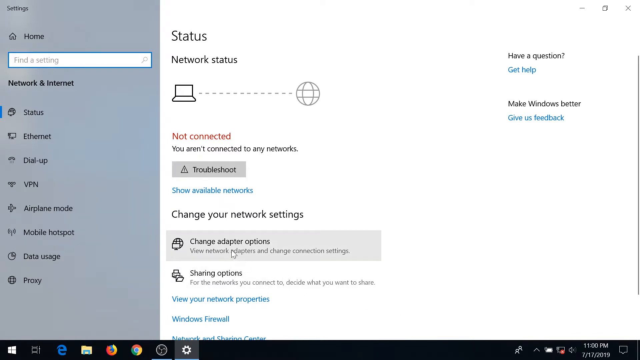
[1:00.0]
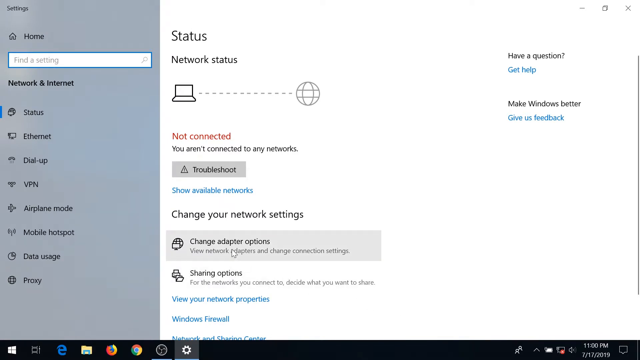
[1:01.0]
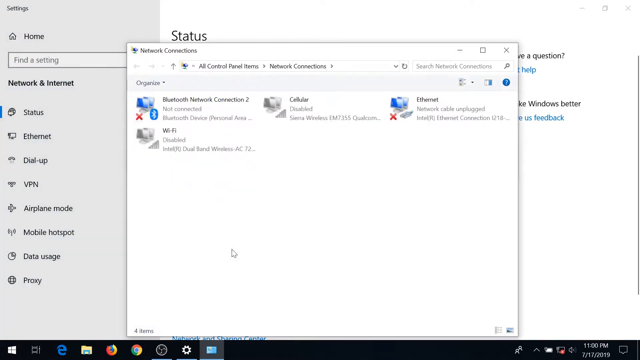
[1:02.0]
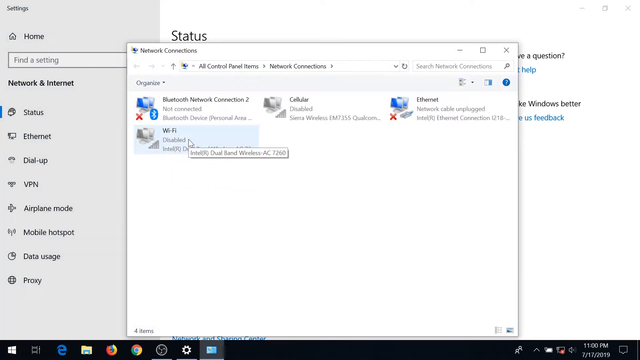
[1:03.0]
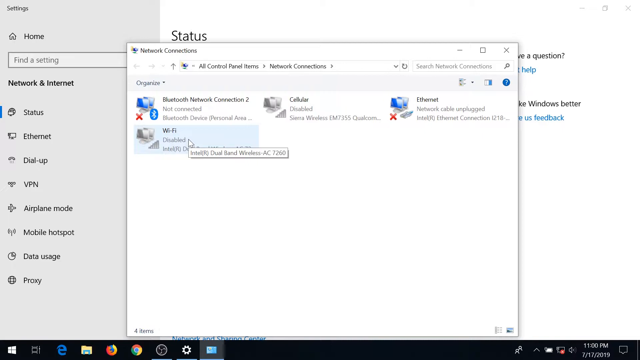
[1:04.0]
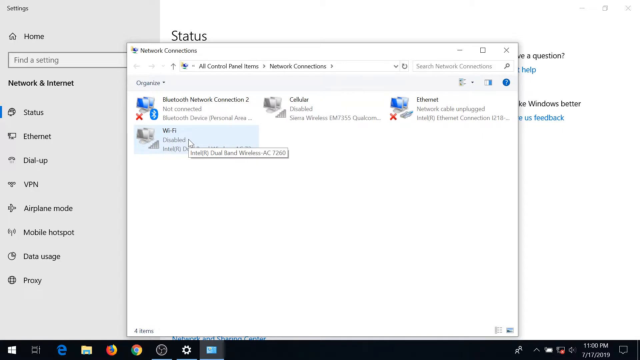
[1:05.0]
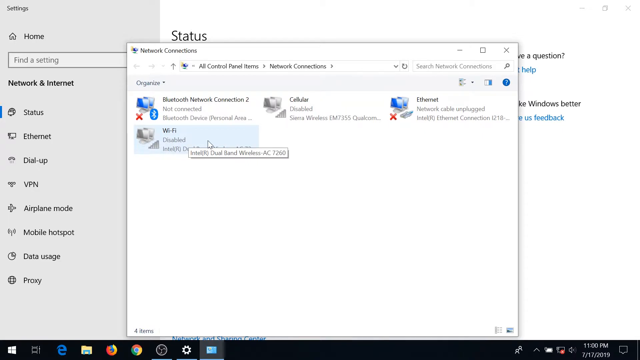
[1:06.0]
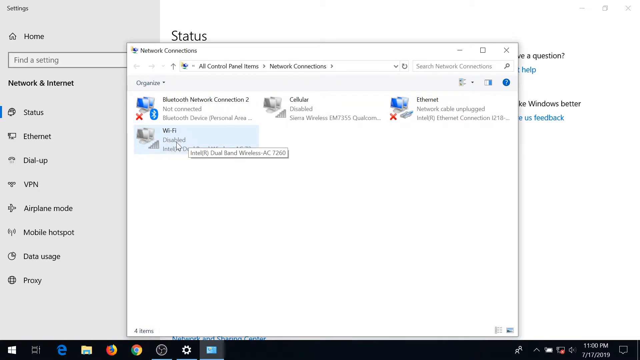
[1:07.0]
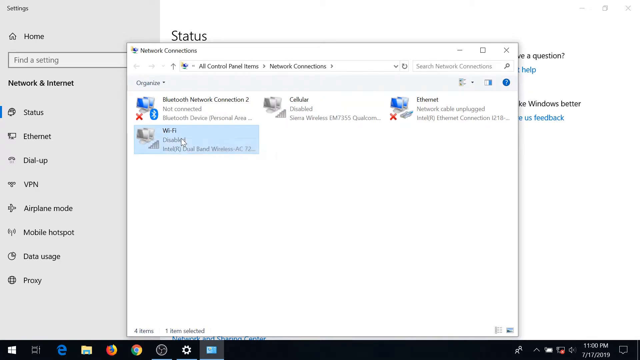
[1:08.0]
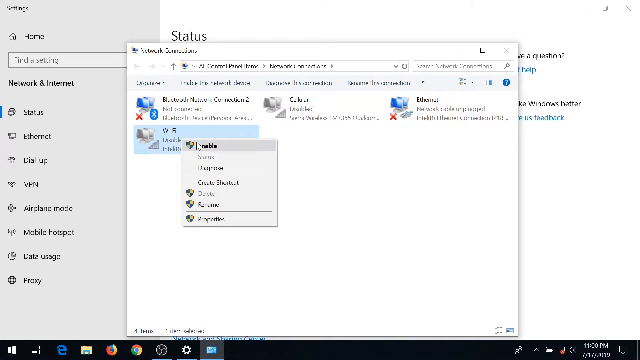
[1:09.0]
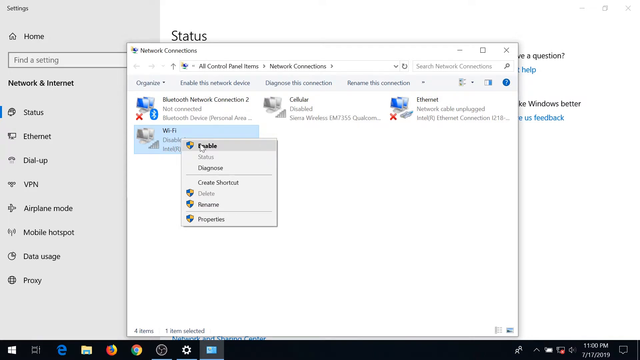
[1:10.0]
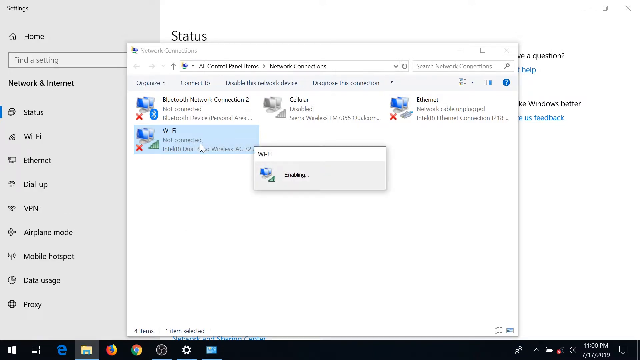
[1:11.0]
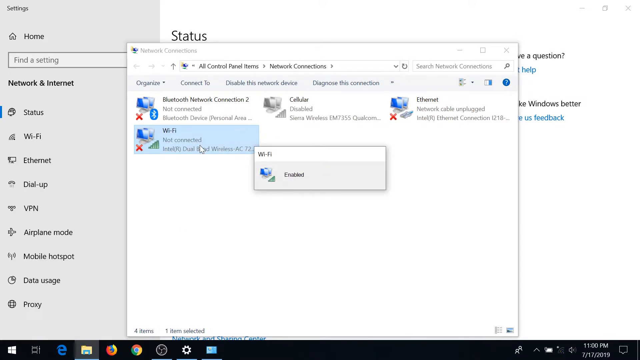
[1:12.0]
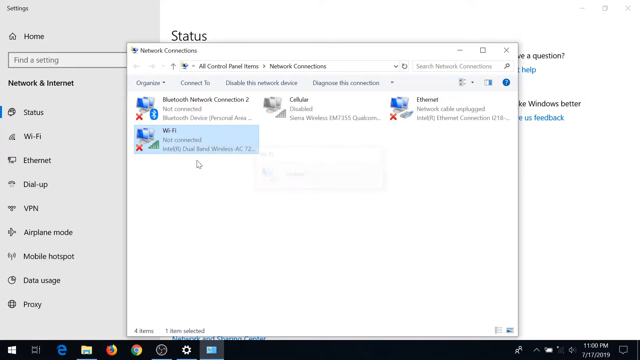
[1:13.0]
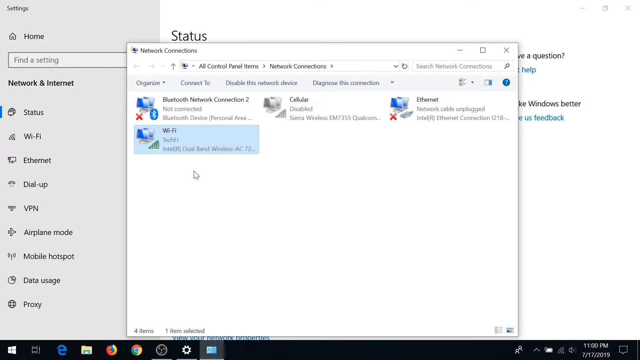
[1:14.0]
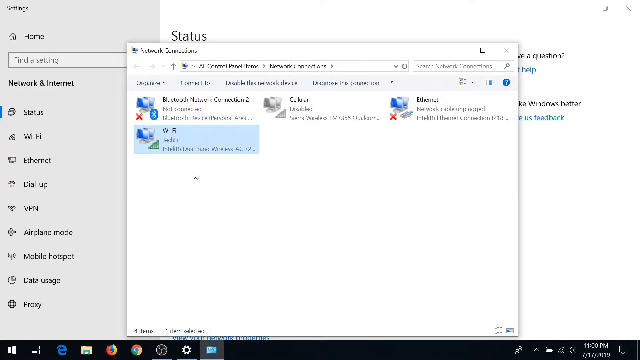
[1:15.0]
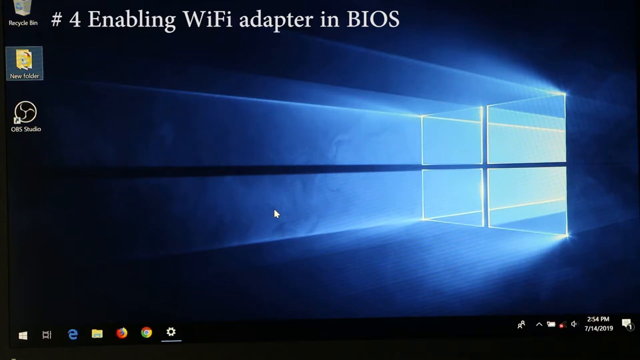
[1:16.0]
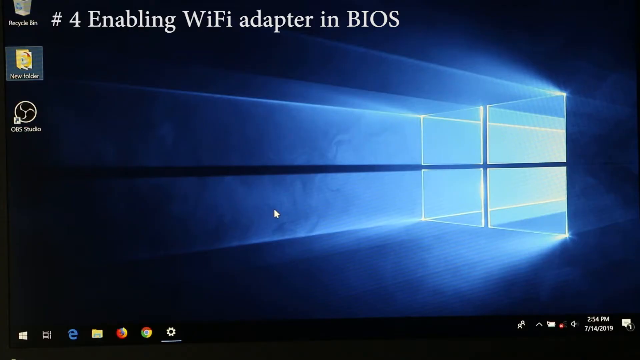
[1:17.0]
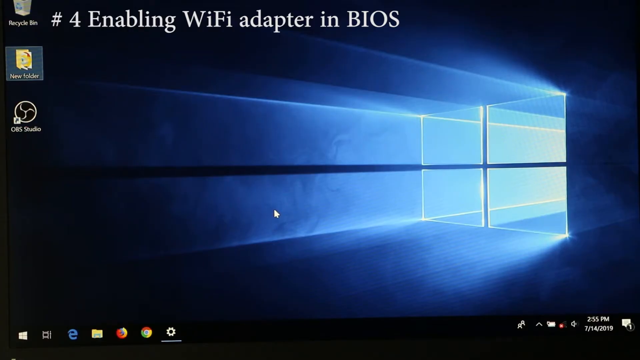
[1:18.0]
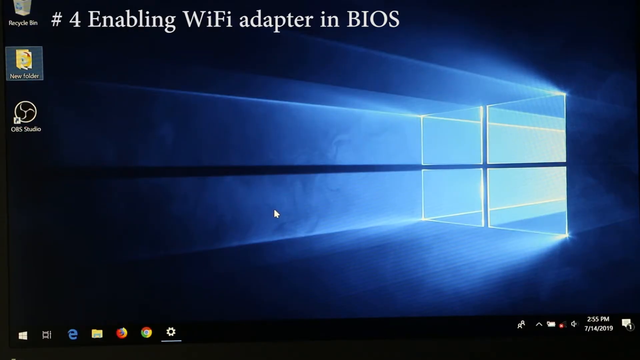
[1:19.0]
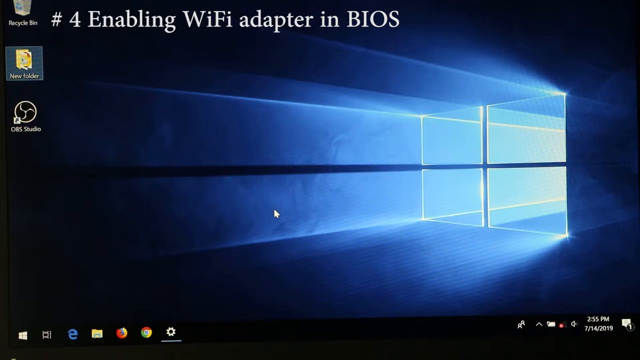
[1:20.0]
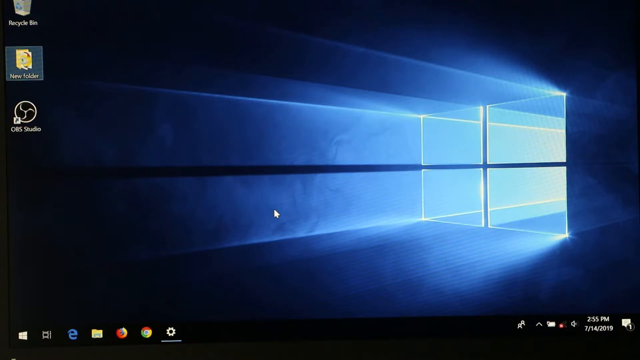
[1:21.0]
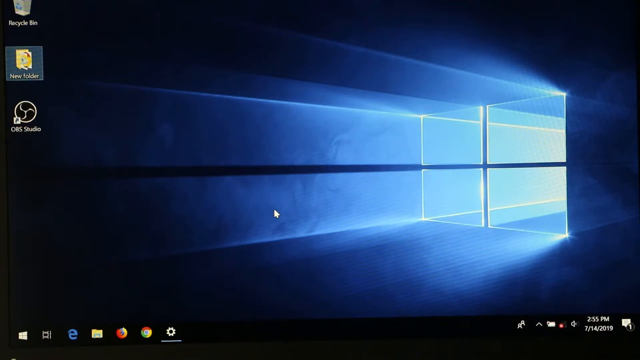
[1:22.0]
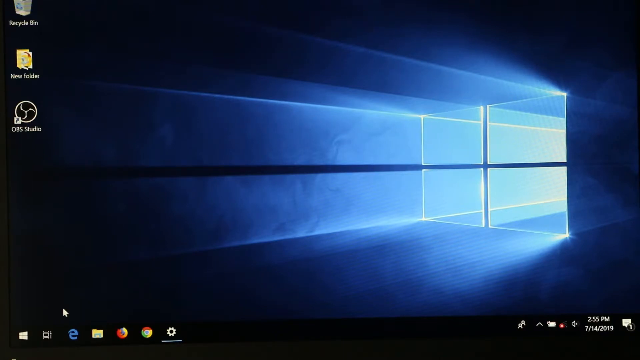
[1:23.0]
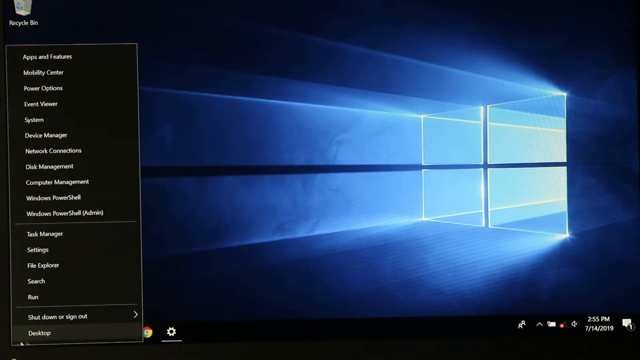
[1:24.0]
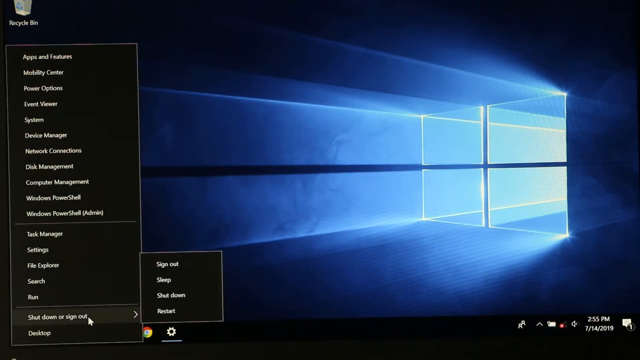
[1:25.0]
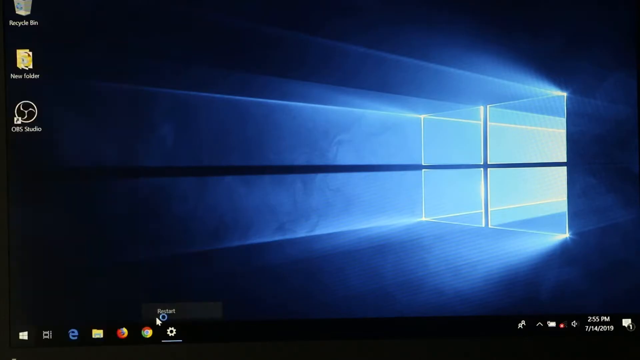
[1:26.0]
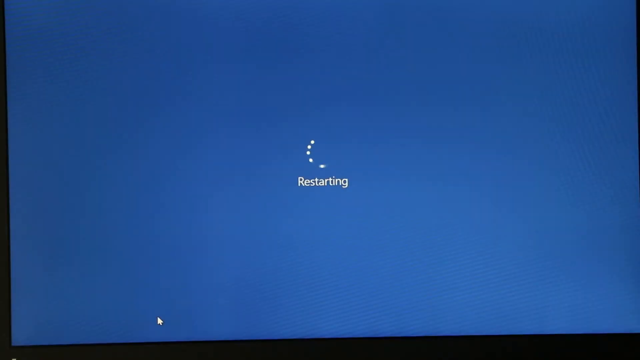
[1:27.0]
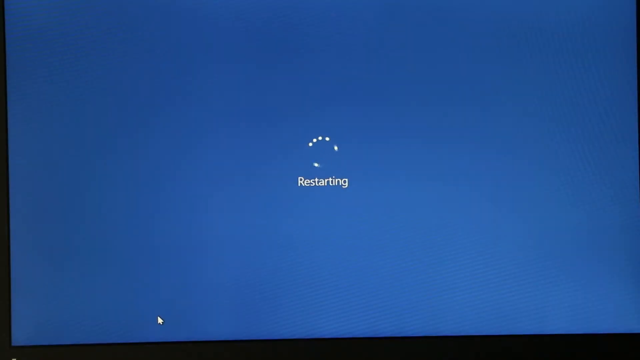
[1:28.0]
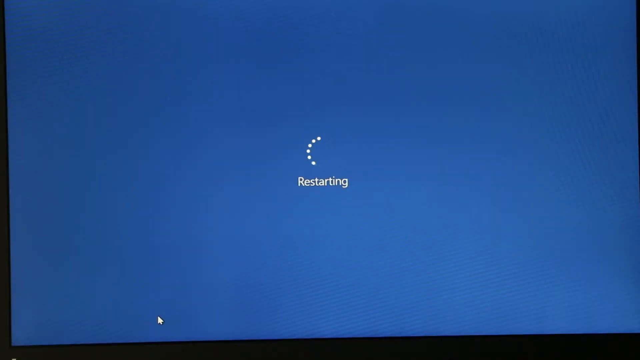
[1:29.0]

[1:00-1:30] On the Status page of the network settings, once the change adapter option is clicked, a secondary white box for Network Connections opens in the center of the screen. It contains four network connections: a Bluetooth network connection, Cellular, Ethernet and Wi-Fi, none of which is connected. The Bluetooth network connection shows not connected and Ethernet shows not connected, while Cellular is disabled and Wi-Fi is also disabled. The user right-clicks on the Wi-Fi icon and a menu appears next to it; the top option is "Enable", next to a shield logo. The user clicks Enable and a third pop-up appears saying "Wi-Fi enabling", which quickly changes to "Wi-Fi enabled". The screen changes back to the desktop, with a line of text across the top that says "Number 4, enabling Wi-Fi adapter in BIOS". The user moves to the icons at the lower left of the screen and opts to sign out or restart the computer. The screen changes to a deep blue screen that says "Restarting", with a buffering circle showing the process.